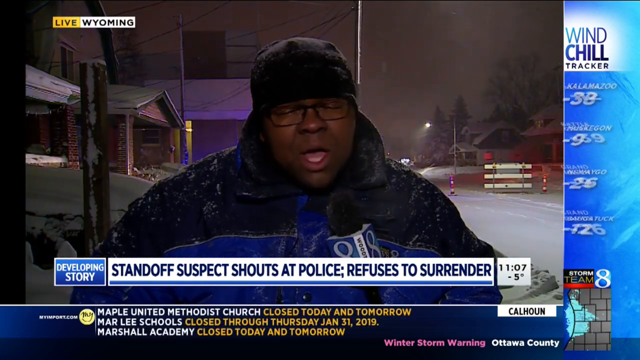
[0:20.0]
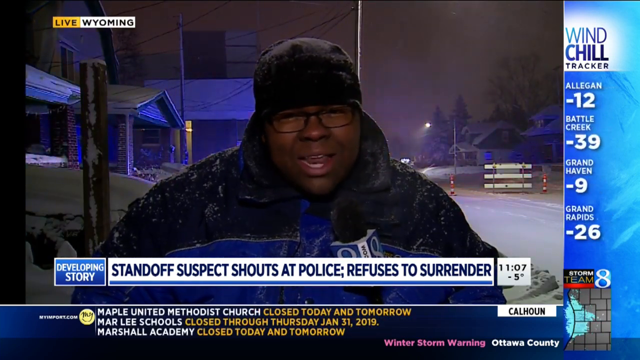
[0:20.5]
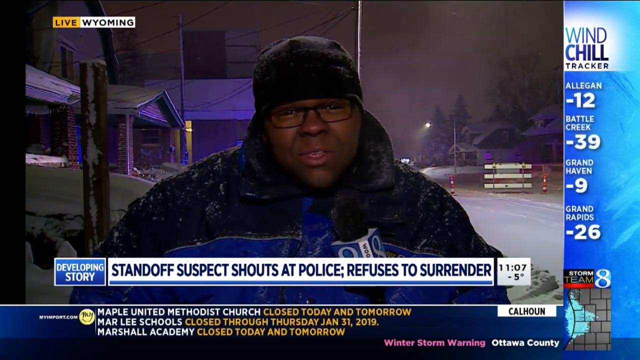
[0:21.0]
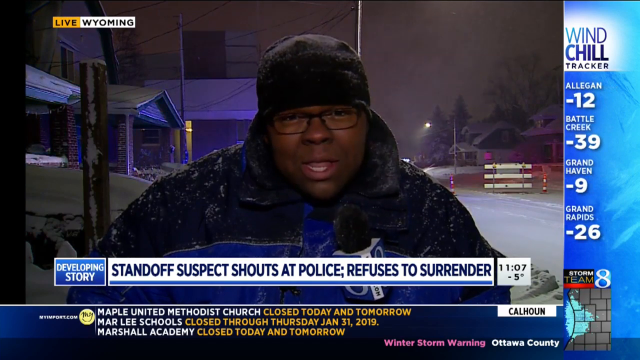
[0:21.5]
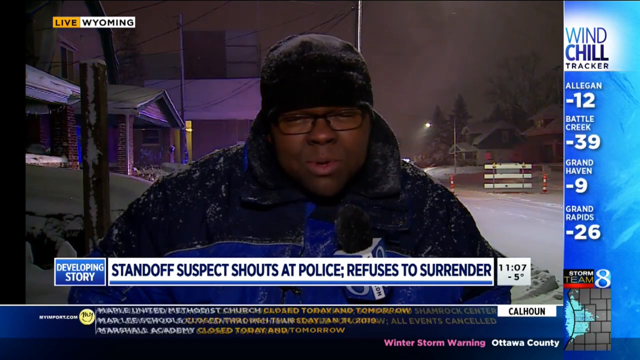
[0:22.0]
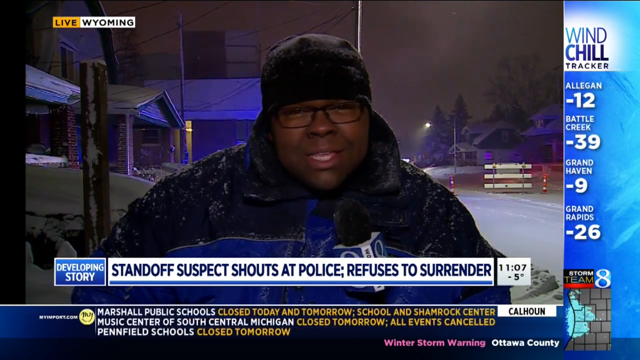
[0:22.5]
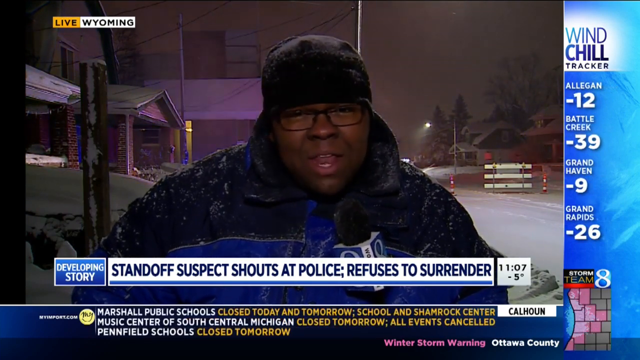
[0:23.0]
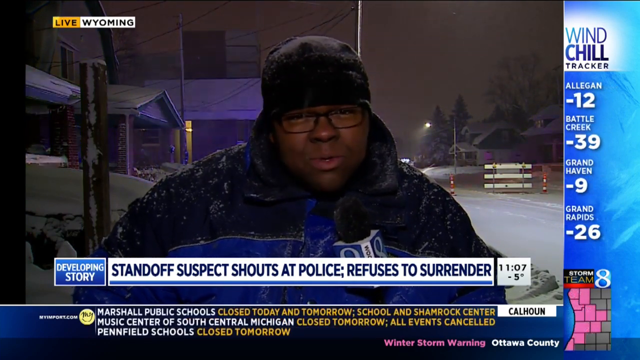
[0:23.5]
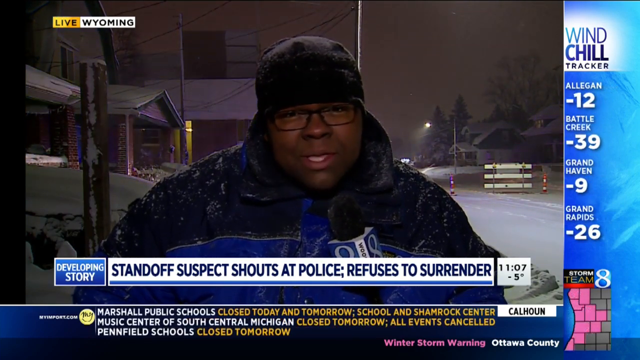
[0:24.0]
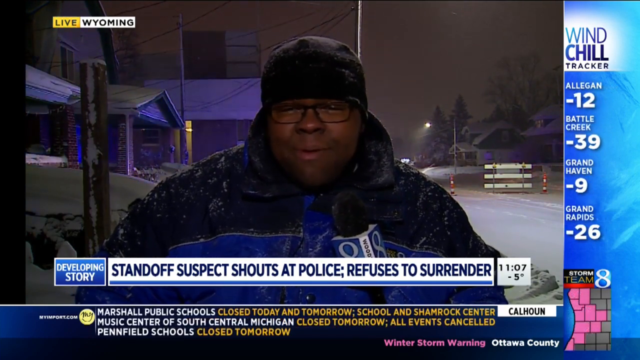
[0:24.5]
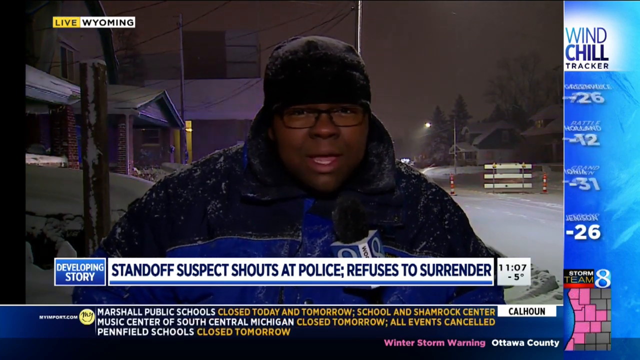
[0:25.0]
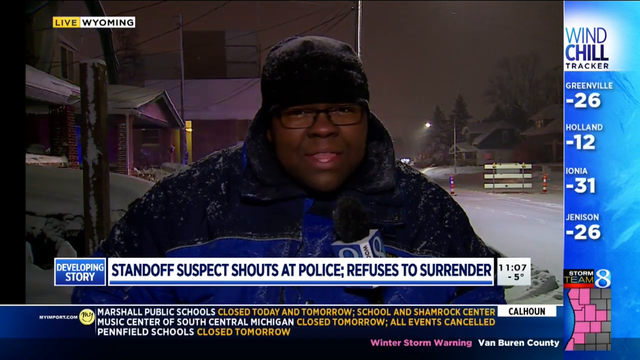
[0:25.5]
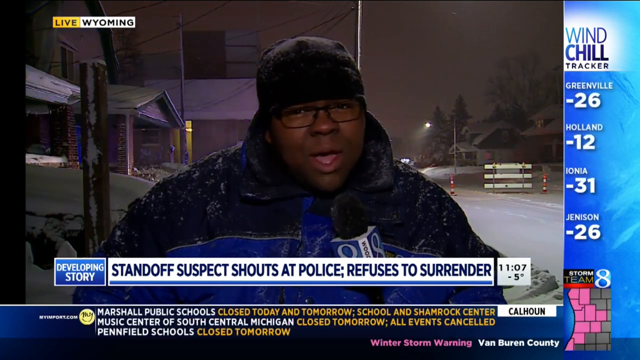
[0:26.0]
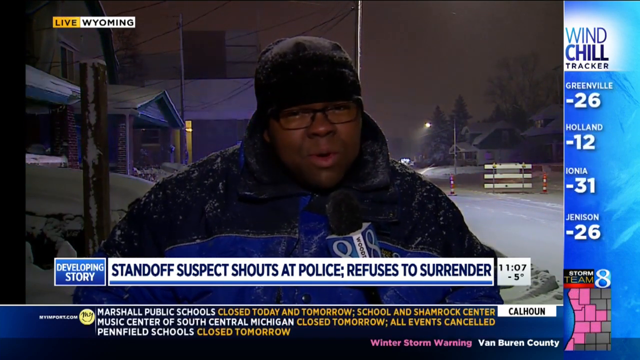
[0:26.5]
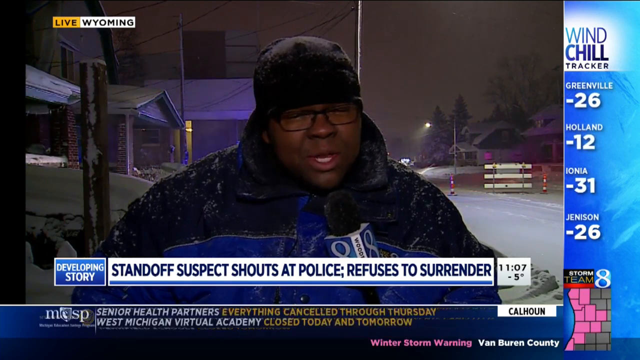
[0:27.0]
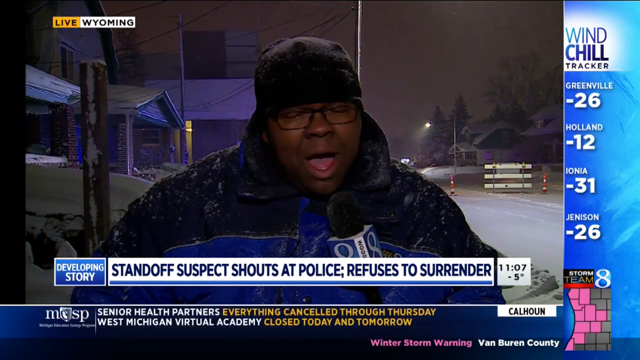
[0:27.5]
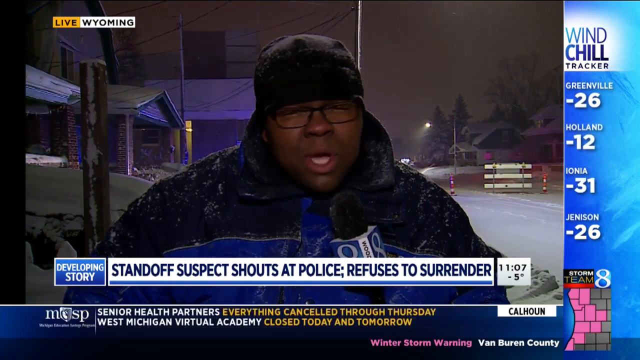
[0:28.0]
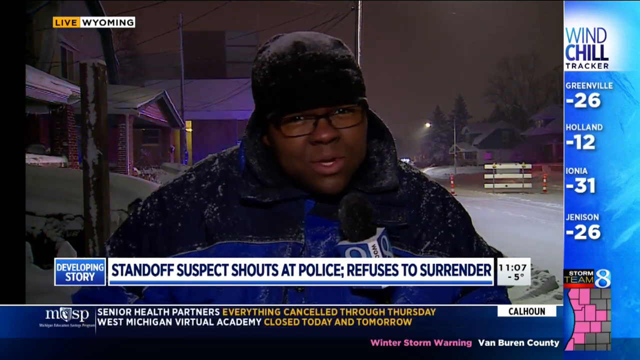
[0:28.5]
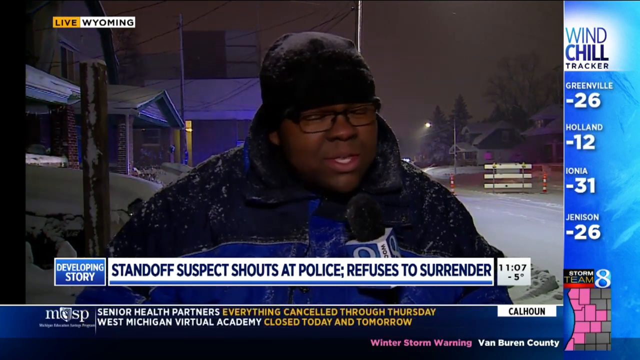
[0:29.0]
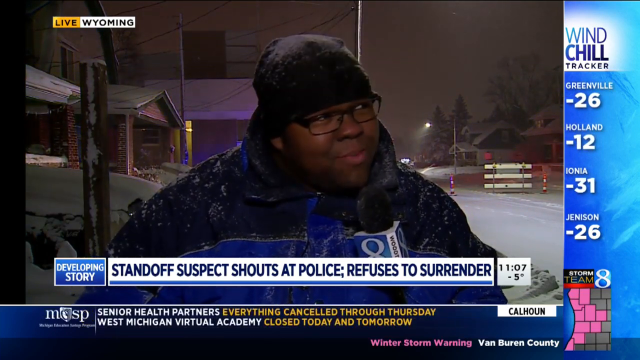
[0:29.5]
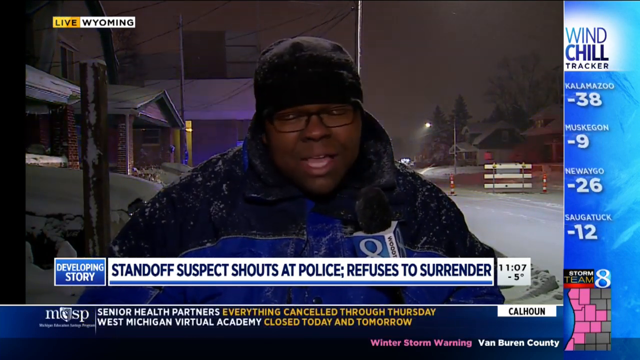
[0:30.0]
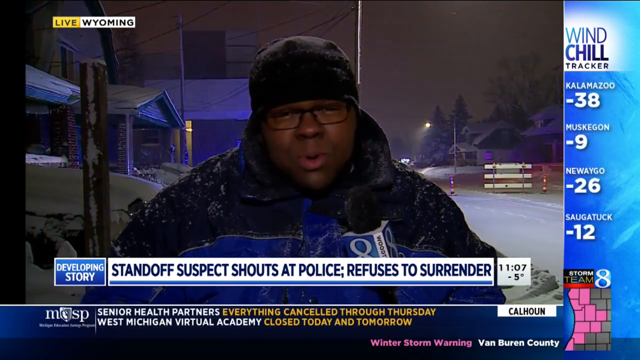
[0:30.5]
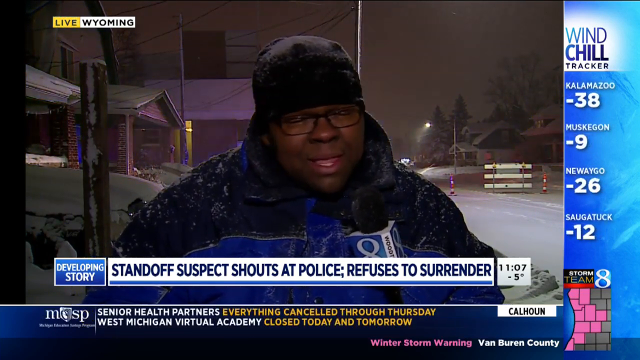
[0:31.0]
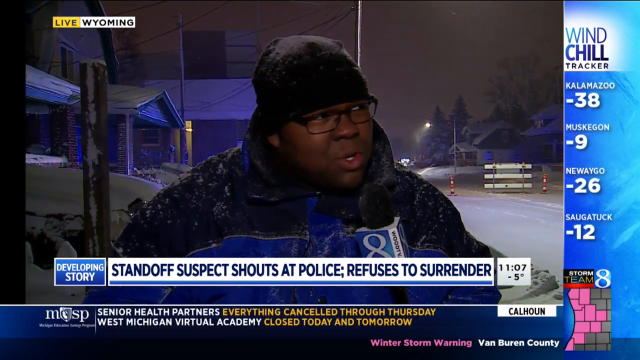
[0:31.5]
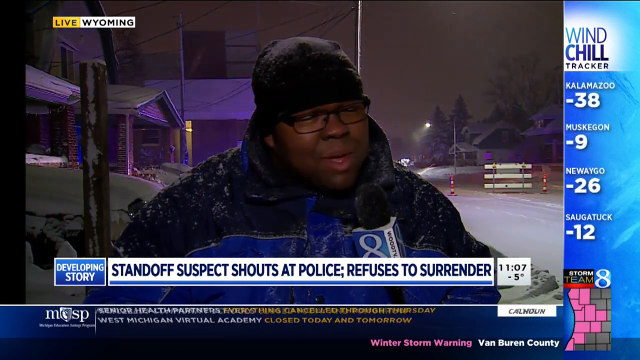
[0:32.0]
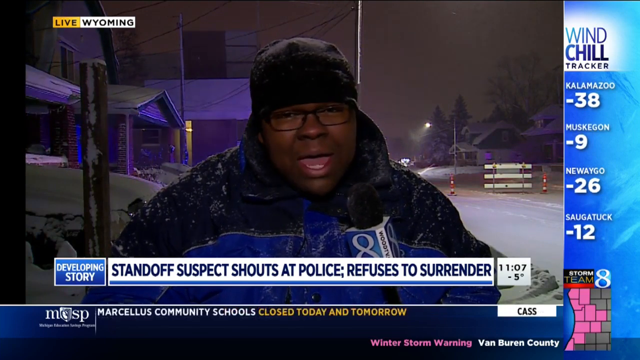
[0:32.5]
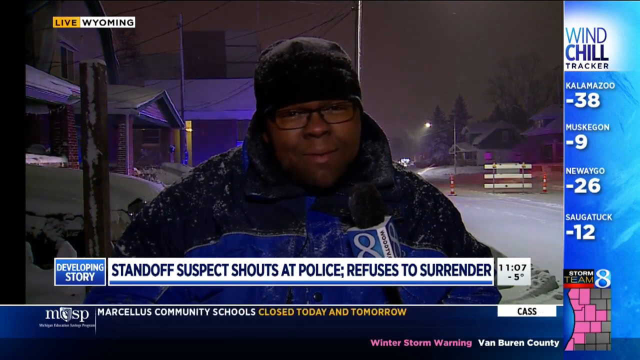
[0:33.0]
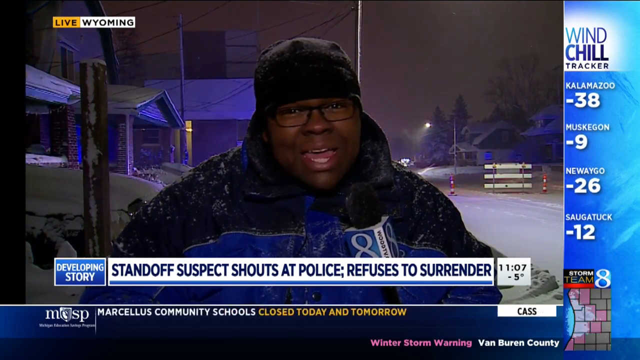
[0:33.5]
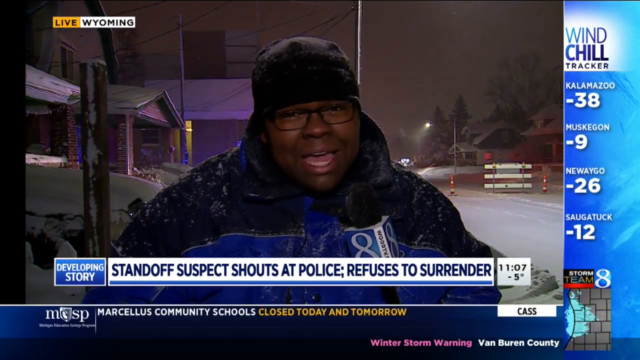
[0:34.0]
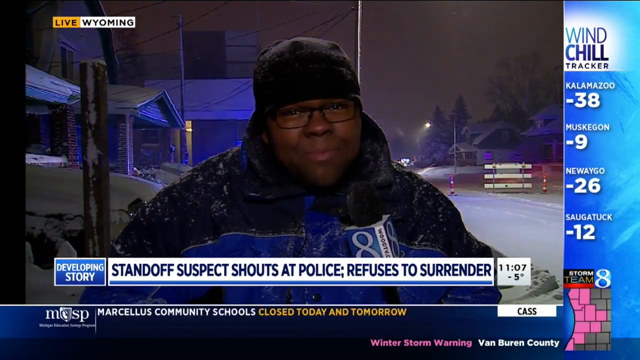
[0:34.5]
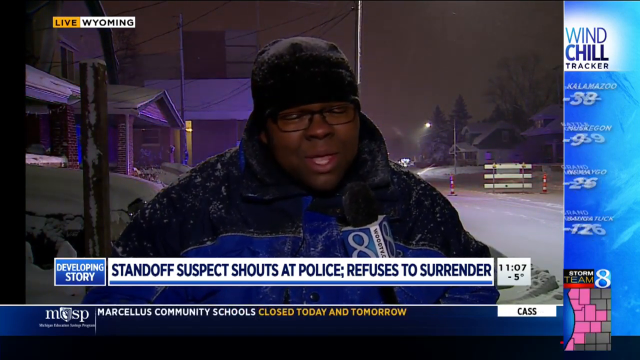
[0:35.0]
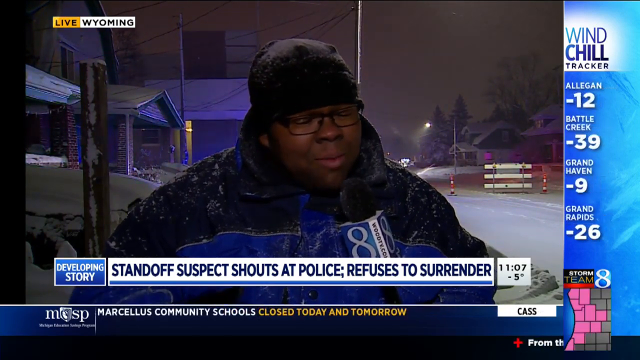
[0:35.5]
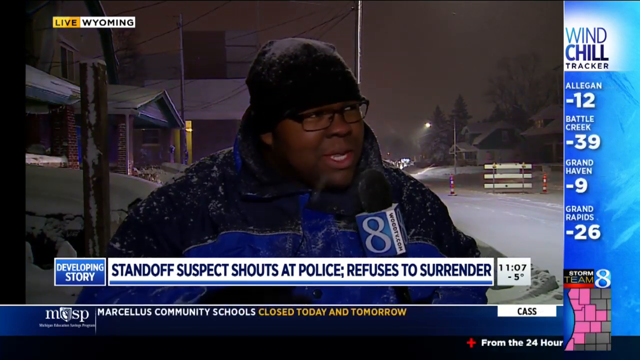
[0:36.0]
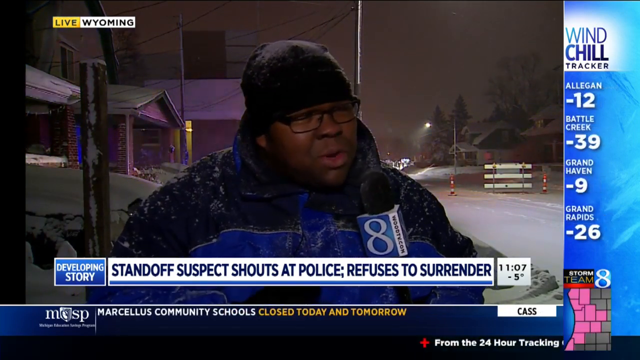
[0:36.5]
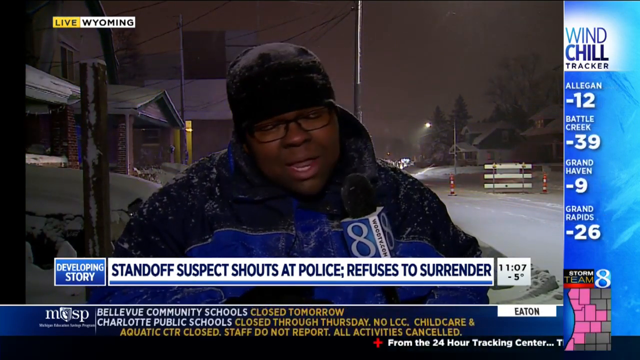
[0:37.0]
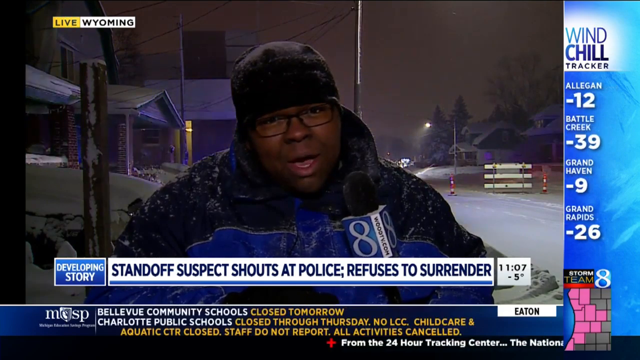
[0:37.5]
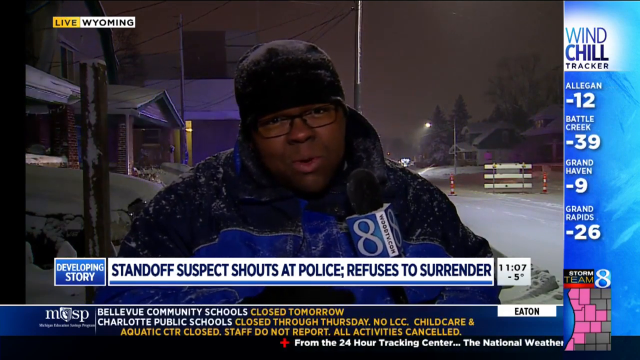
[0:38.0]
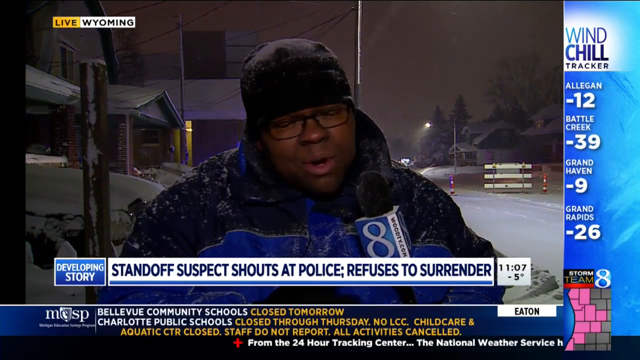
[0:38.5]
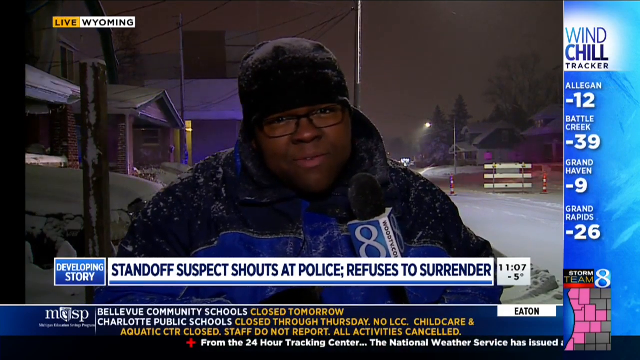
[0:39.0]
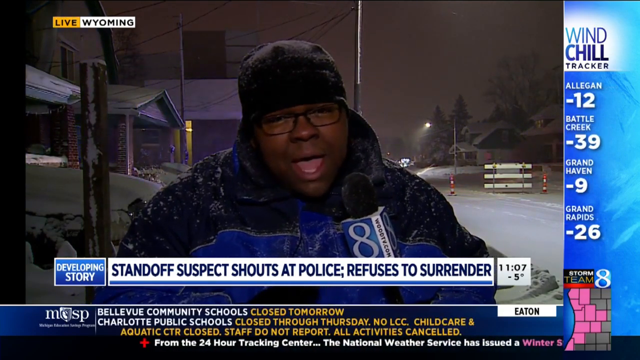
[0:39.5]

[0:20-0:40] The correspondent stands outside in the cold, apparently in the neighborhood where the standoff is taking place. He is on a street with quite a few houses and some trees, and across the street there is a roadwork-type traffic sign, a little distance from him. Snow covers the rooftops and the ground, and behind him there is something almost like a small hill covered in snow. Snow is falling, and something that looks like sleet is on his jacket. He speaks directly at the camera into his microphone; at one point he turns his head slightly, eyes looking to the side, then turns back to face the camera. Flashing lights are visible, not very close to him, mostly blue flashing repeatedly with maybe a little red, likely police lights.